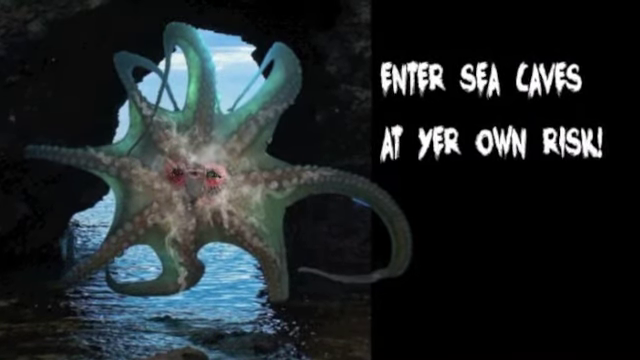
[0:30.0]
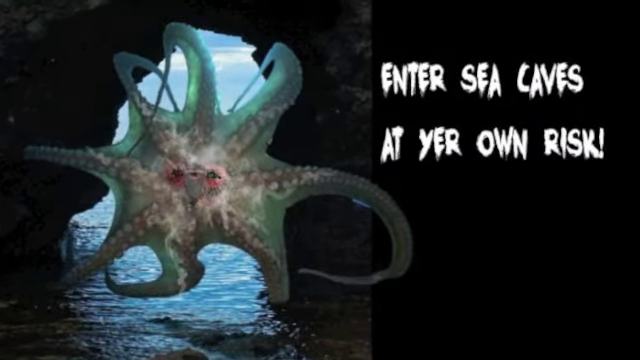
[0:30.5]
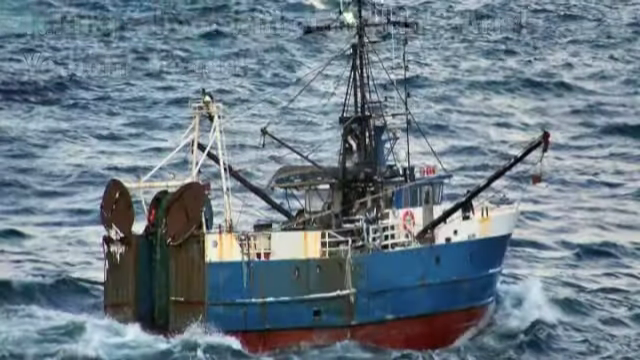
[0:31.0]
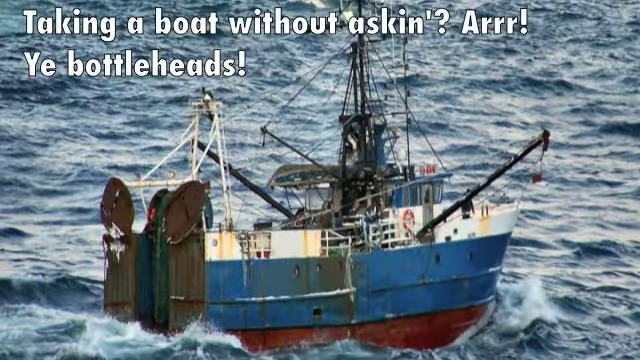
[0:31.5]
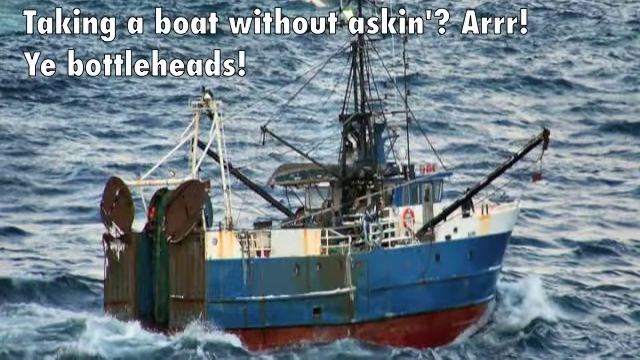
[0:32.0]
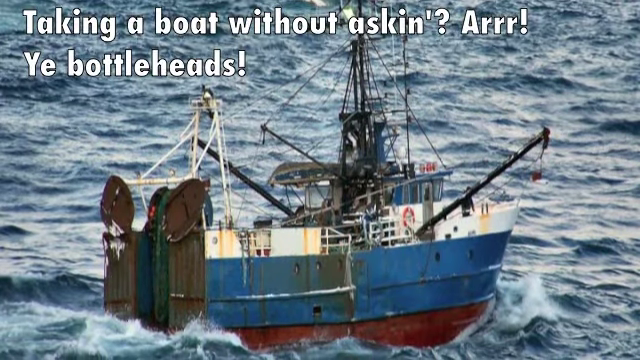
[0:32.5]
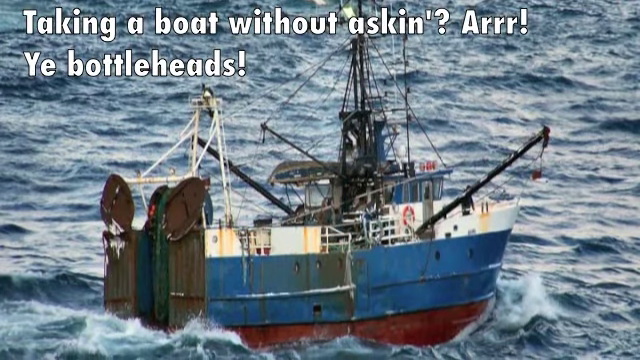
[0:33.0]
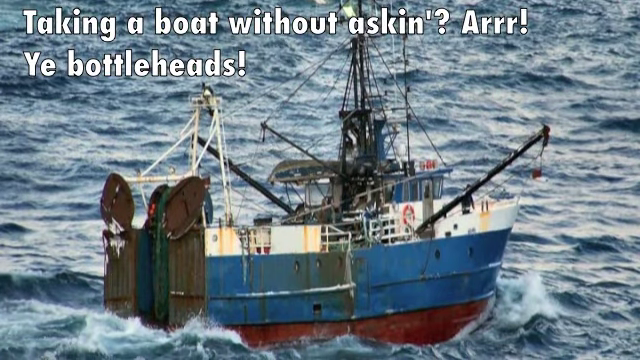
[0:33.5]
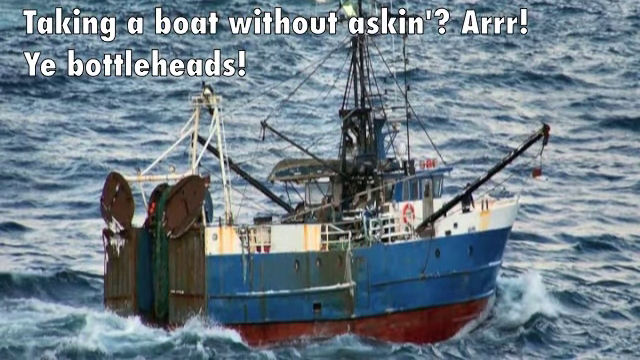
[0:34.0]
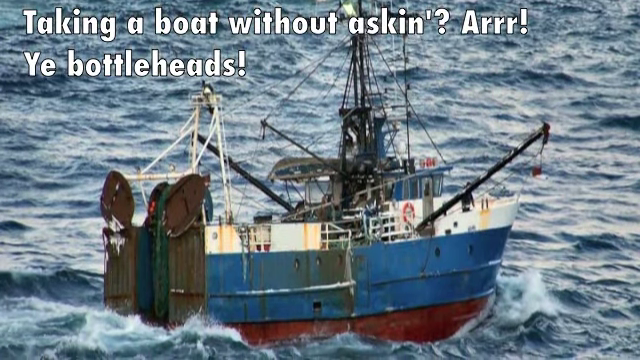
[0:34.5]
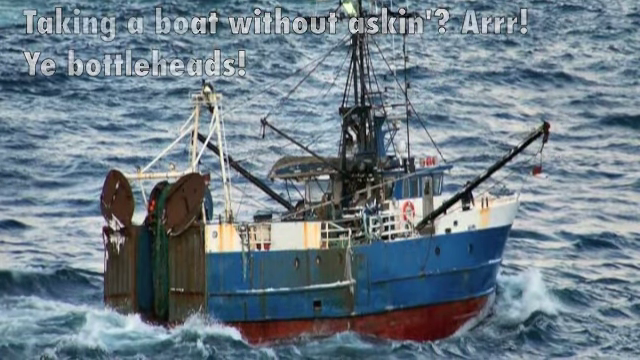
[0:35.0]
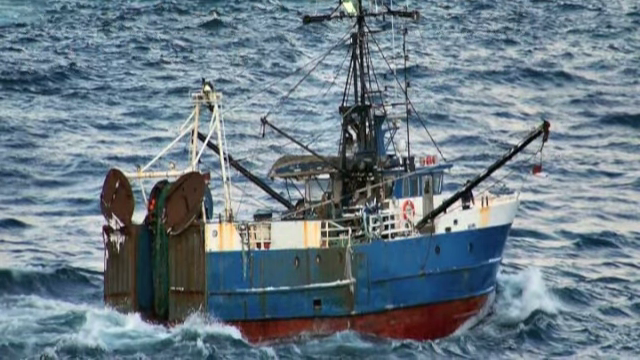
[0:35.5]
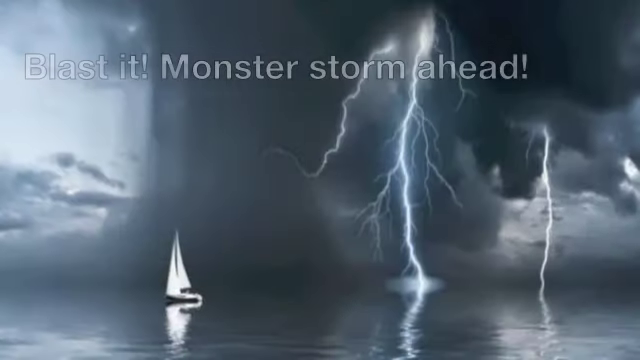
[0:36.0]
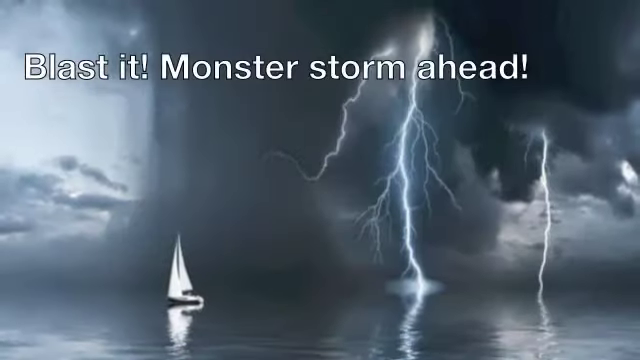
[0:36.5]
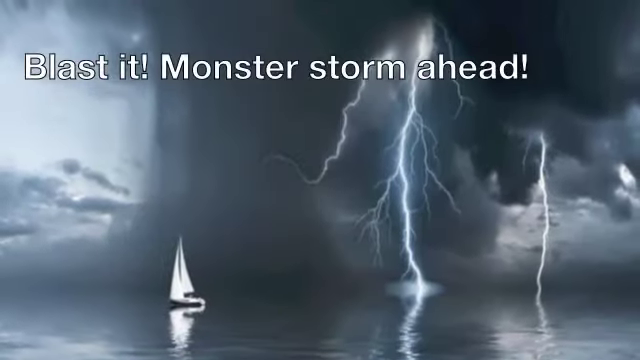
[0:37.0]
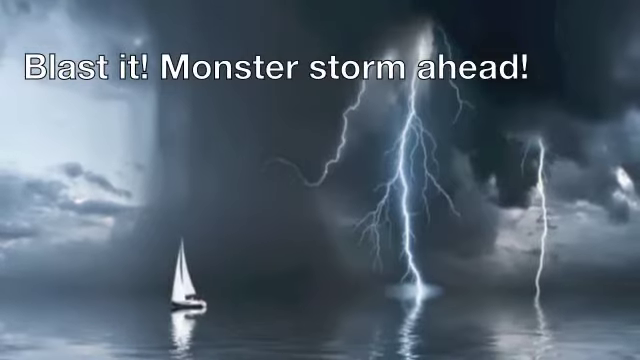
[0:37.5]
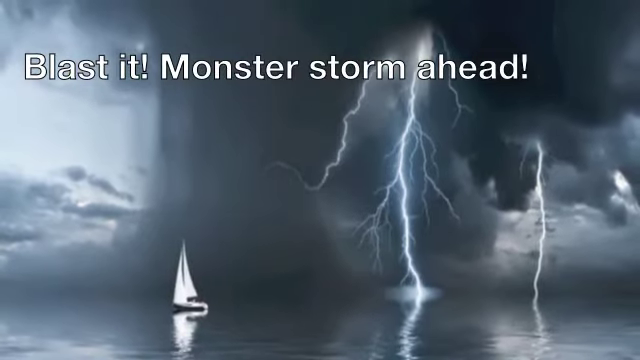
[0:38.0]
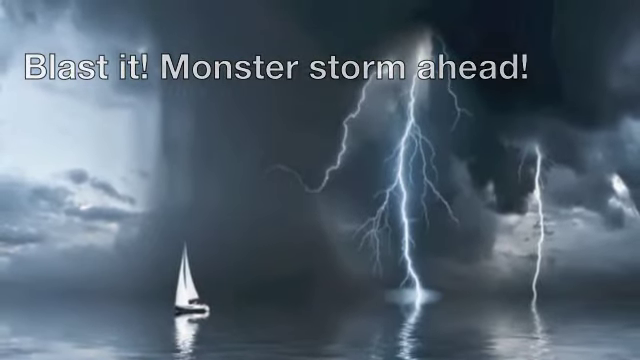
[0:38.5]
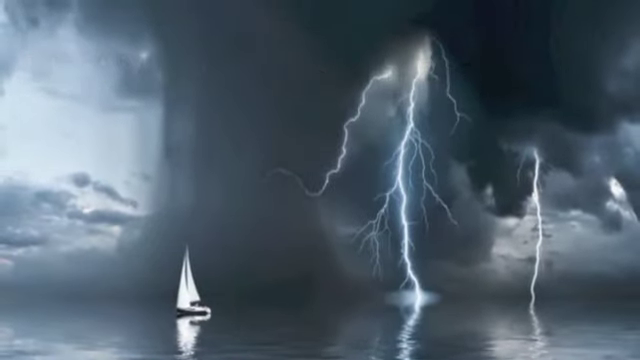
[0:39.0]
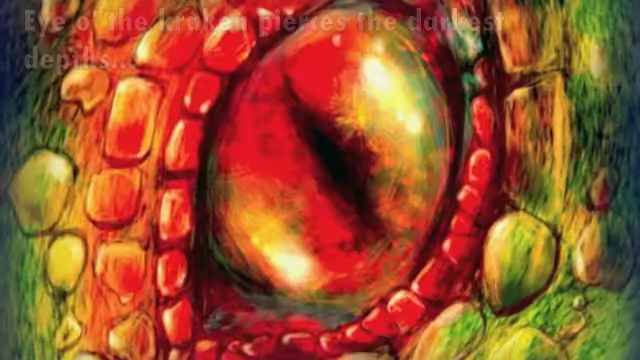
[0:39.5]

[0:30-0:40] The same kraken image is on screen, and then the screen transitions to footage of a boat that looks like it may be a fishing boat, shown in the water with text reading "taking a boat without asking are you bottleheads", seemingly a frustrated message about a boat being stolen. It then cuts to an image of a sailboat in a thunderstorm on the water, with white text reading something like "be careful blasted monster storm ahead". Next is a picture of what looks like a dragon, with its eyes as the focus of the image, and text at the very top that includes "the kraken pierces the darkest depths". The sequence seems to tell a story of a kraken, like a warning from a sailor or pirate.